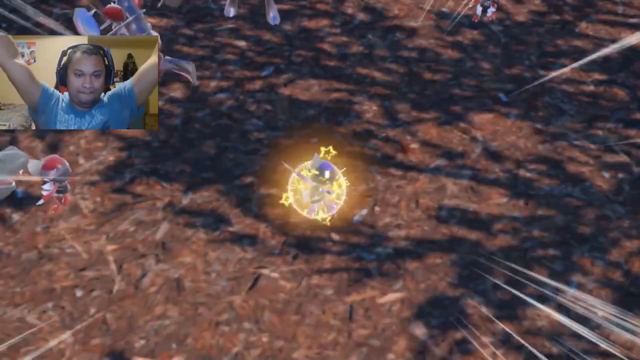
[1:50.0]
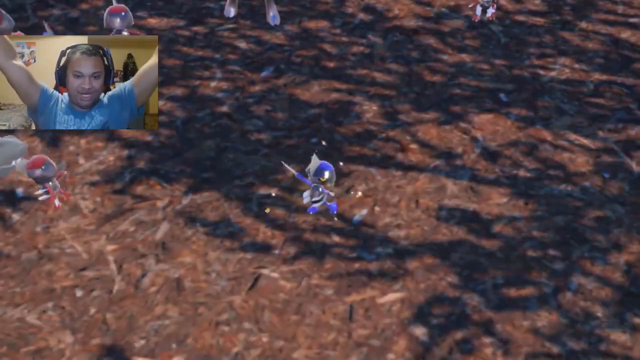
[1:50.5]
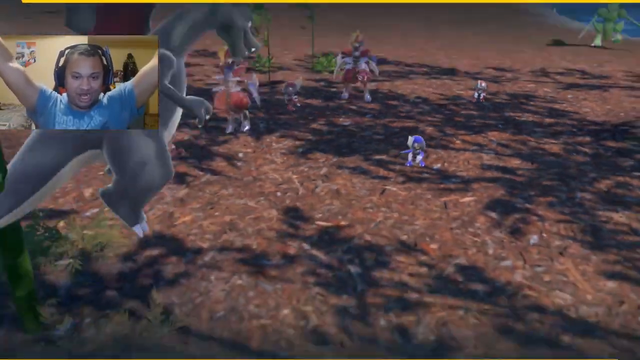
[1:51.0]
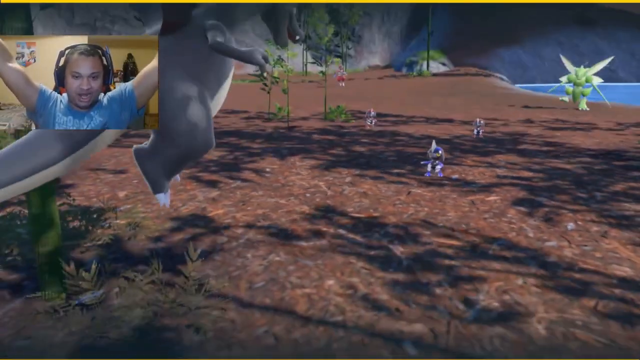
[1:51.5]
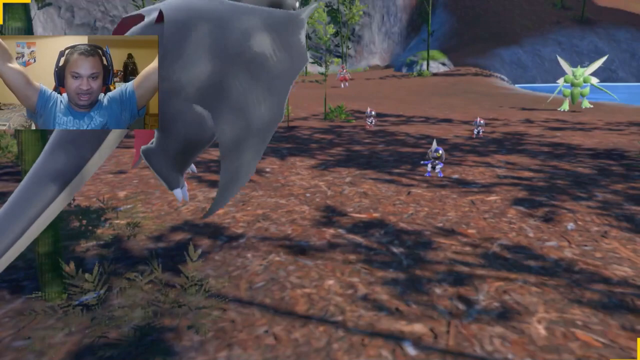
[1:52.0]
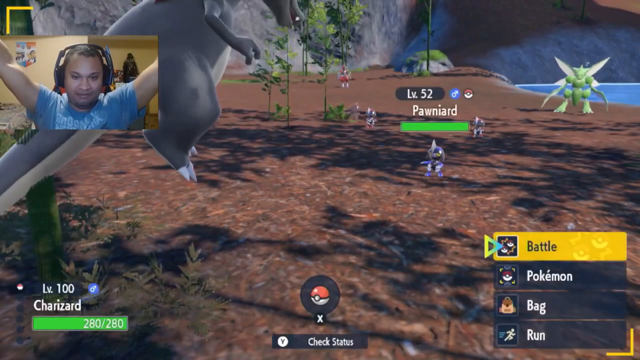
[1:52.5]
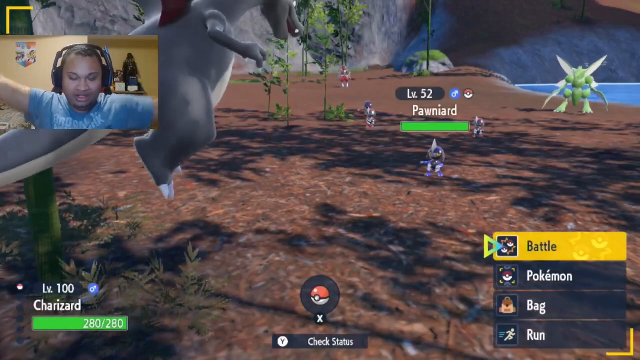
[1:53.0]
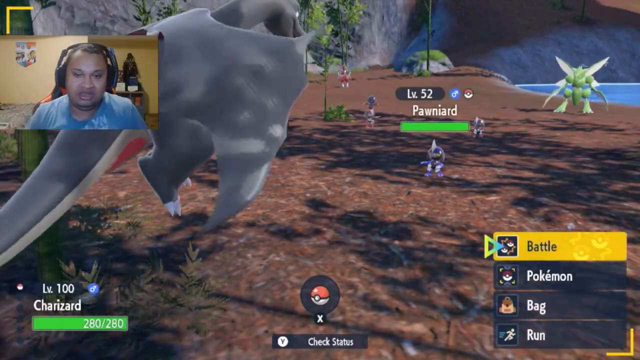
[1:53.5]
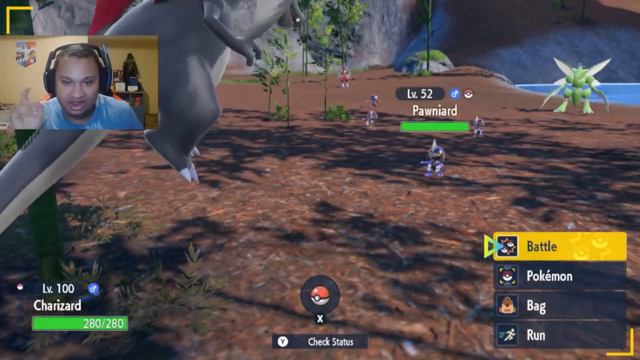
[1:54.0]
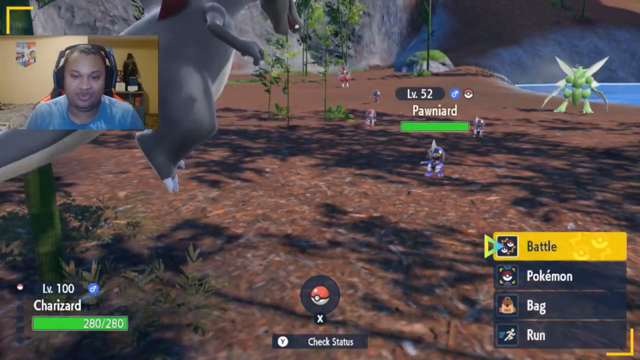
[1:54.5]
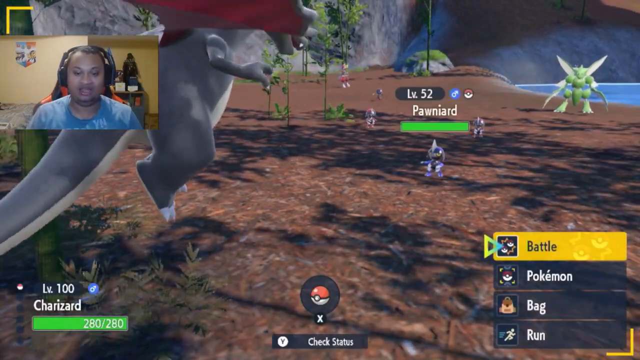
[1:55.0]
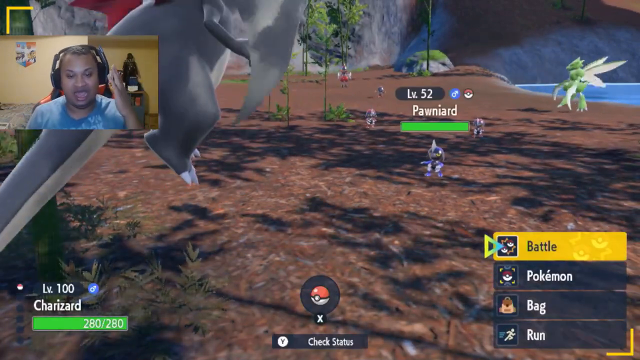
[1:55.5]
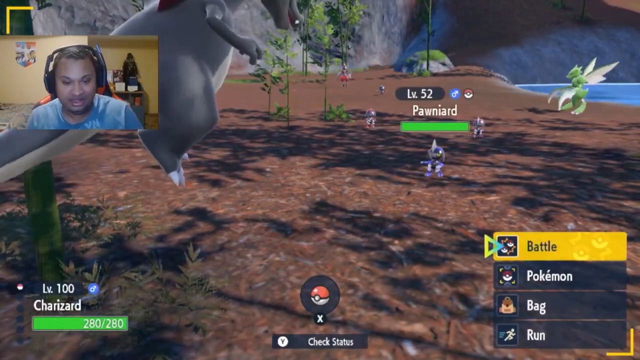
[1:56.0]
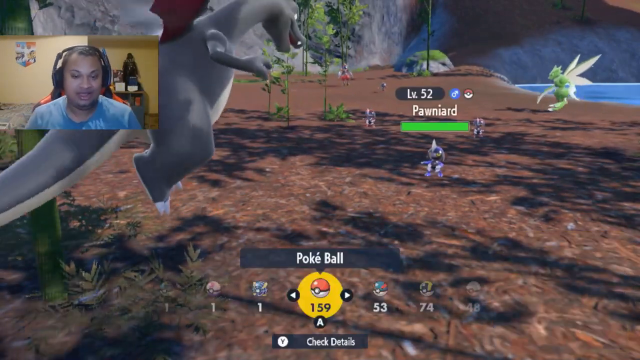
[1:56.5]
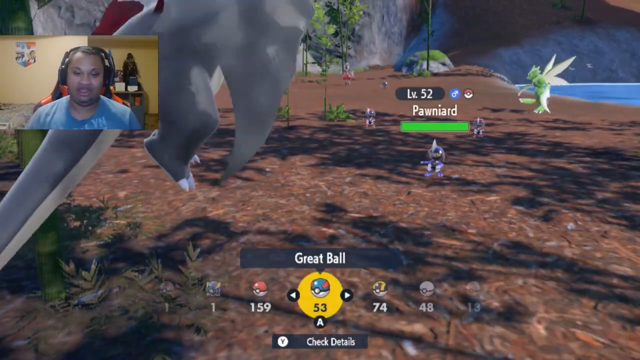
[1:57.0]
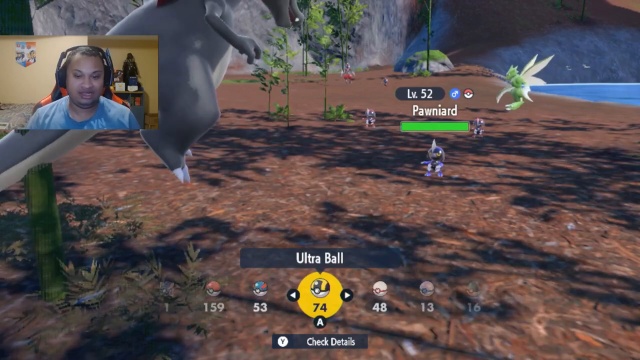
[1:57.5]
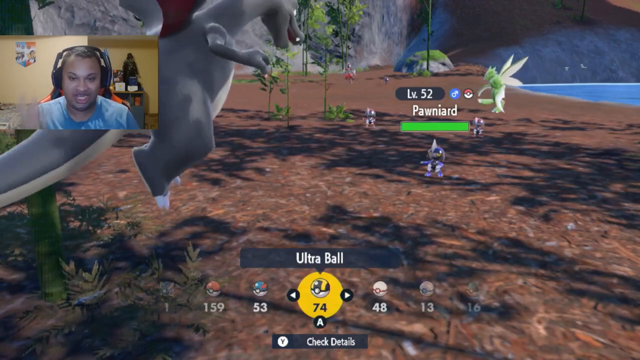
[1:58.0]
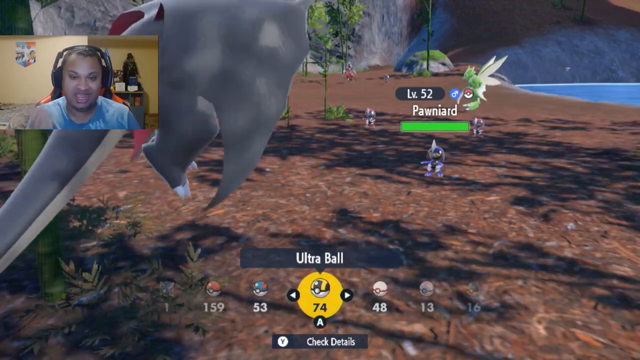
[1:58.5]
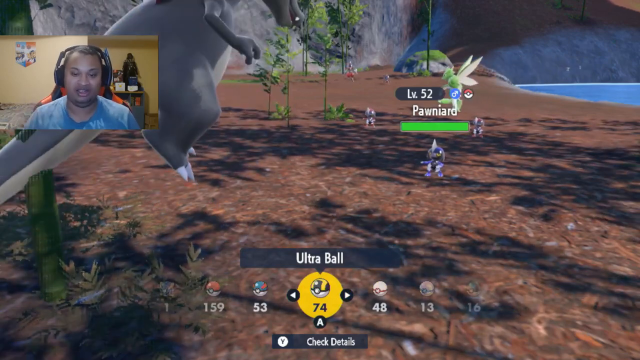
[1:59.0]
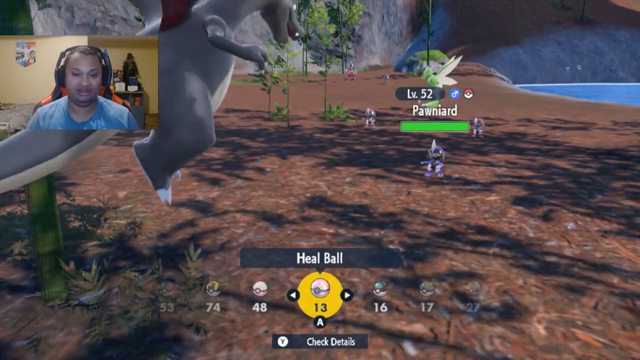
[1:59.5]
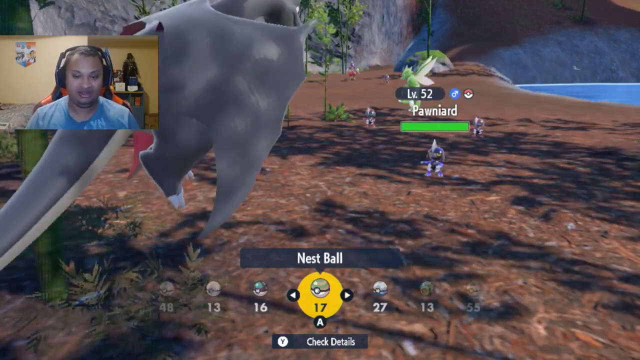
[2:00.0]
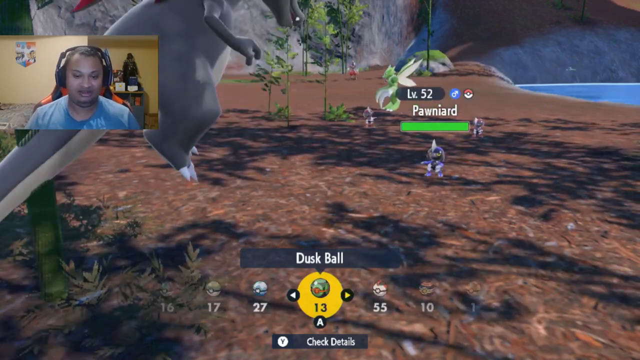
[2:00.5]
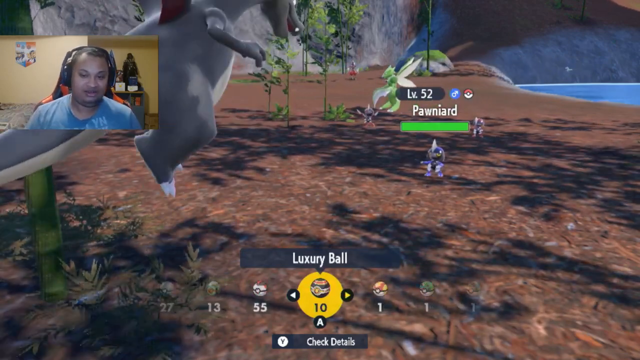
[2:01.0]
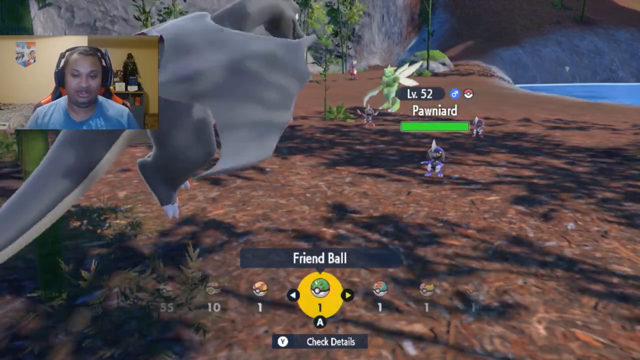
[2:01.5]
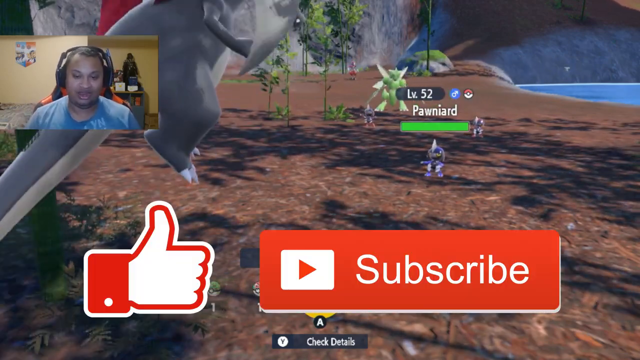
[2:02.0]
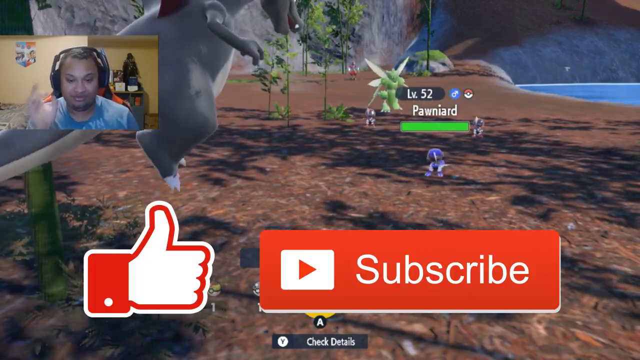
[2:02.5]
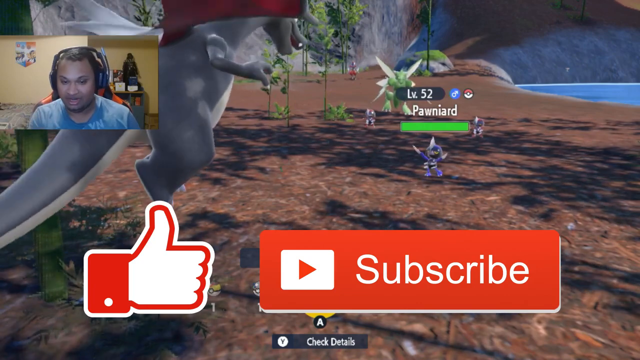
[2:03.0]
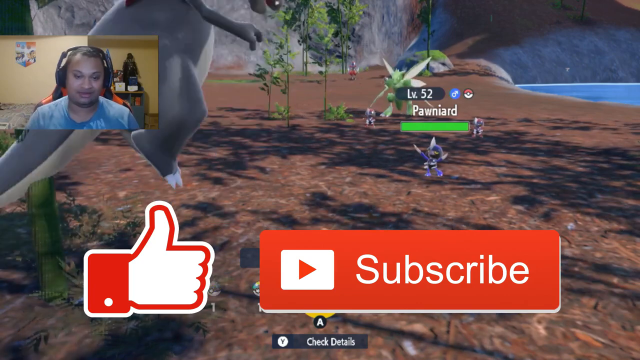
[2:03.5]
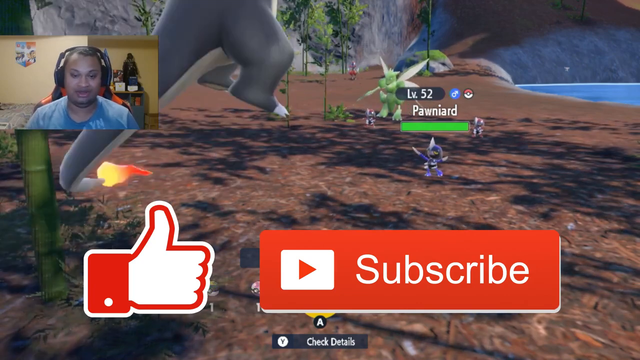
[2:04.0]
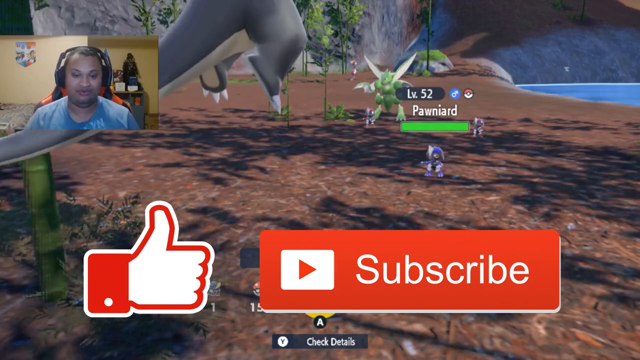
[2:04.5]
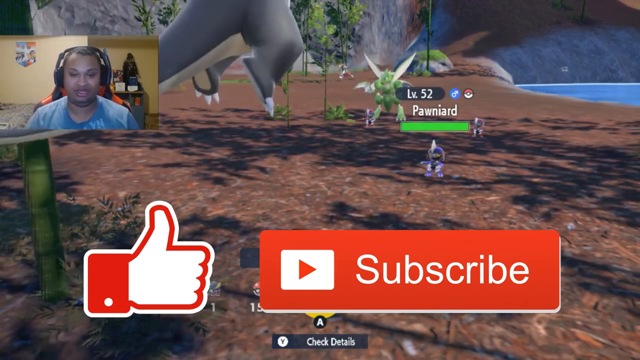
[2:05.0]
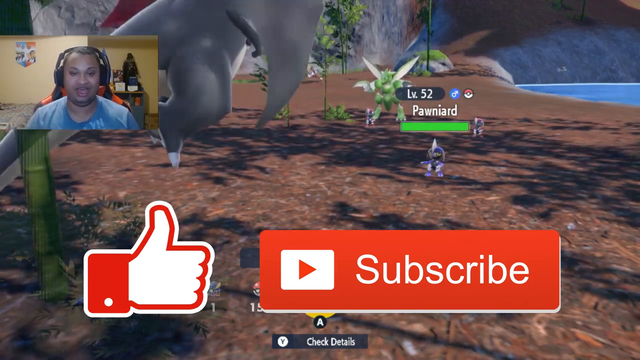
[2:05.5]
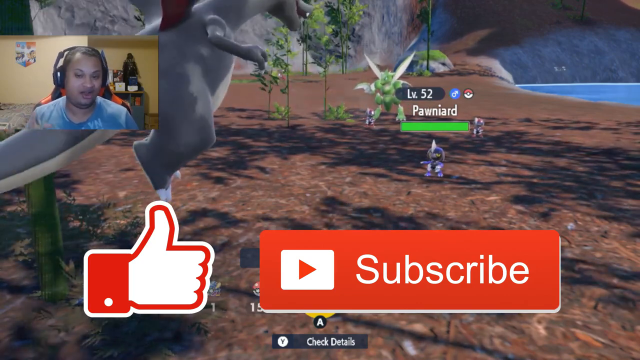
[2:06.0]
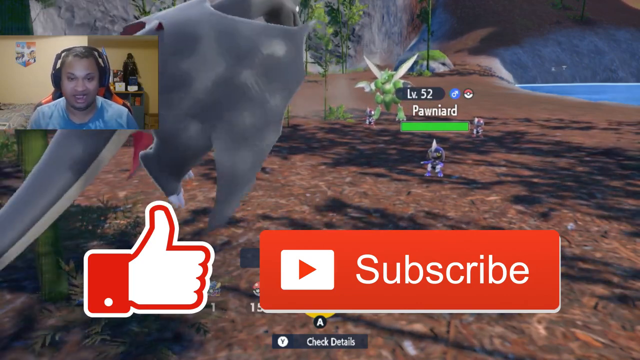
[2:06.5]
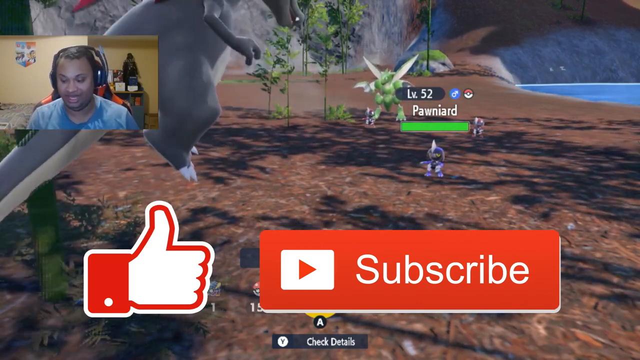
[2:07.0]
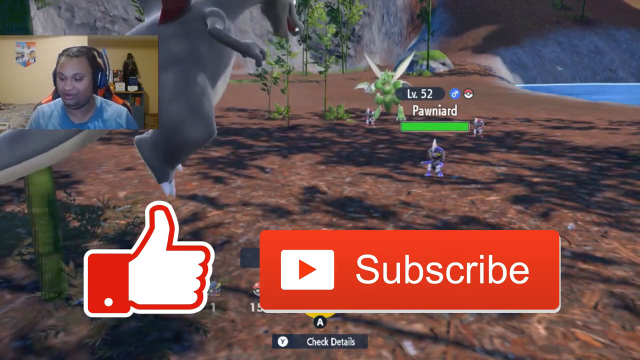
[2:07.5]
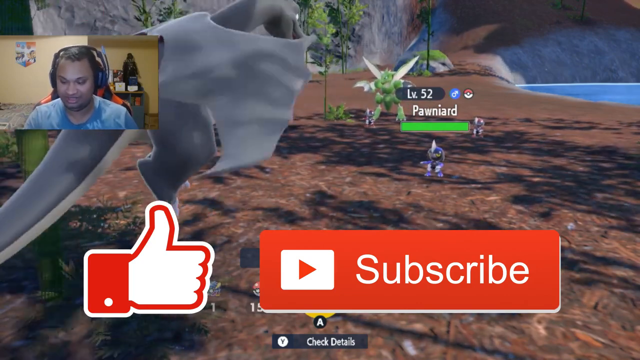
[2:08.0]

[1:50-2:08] The view zooms back out from the tiny purple robot that seemed to be powering up, and it looks up at the sky. The gray dragon with a flame tail that the boy summoned by the picnic table, apparently the one he made the big sandwich for, flies just above the ground, looking down threateningly at the tiny robot, which looks up at the dragon looking really irritated. The other tiny robots have run away. In the distance, a green bug-looking monster at the lake's edge slowly walks a little closer toward the viewer and the tiny robot; it has long flipper-like arms and big wings like a dragonfly. The host animatedly describes what is going on and raises both arms in the air as if he has done something triumphant, and it looks like he is about to do battle with his dragon against the little robot.